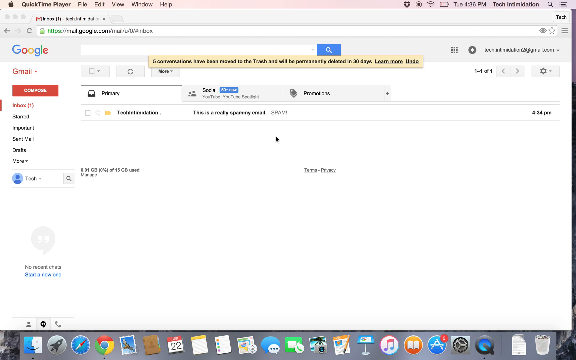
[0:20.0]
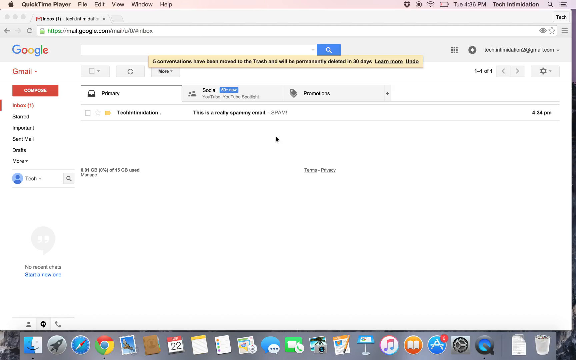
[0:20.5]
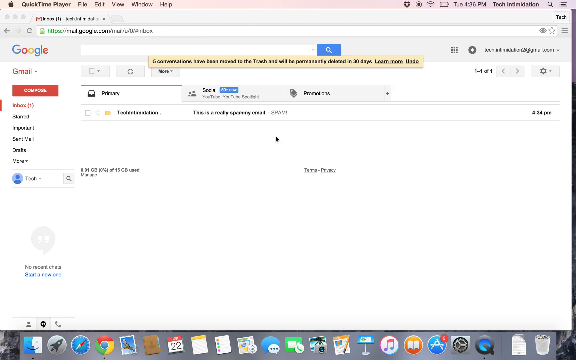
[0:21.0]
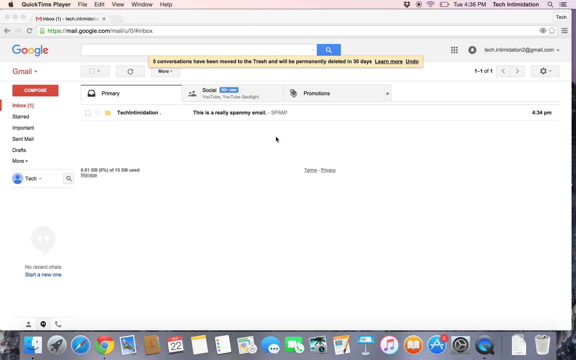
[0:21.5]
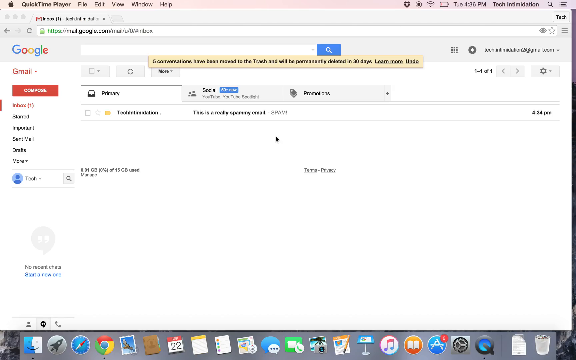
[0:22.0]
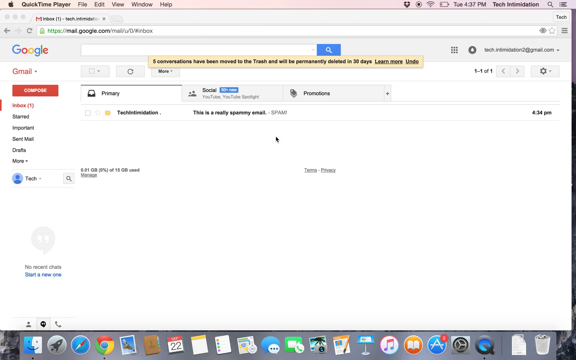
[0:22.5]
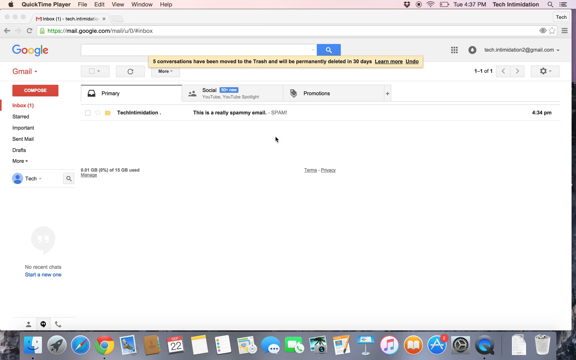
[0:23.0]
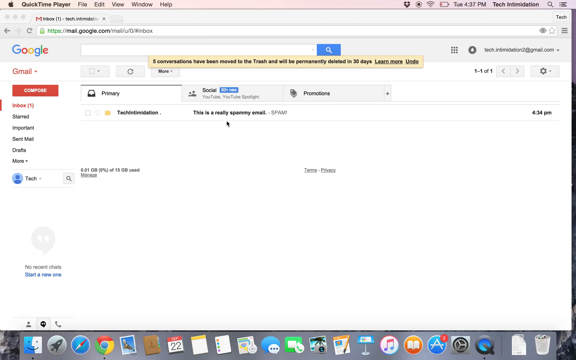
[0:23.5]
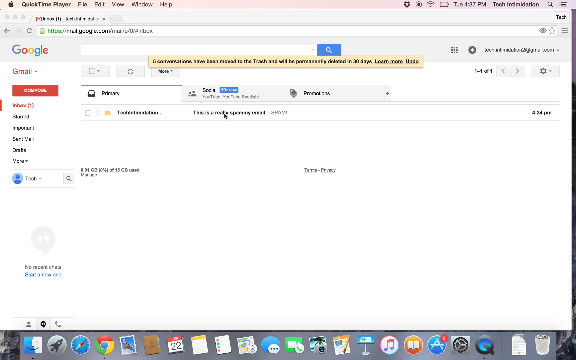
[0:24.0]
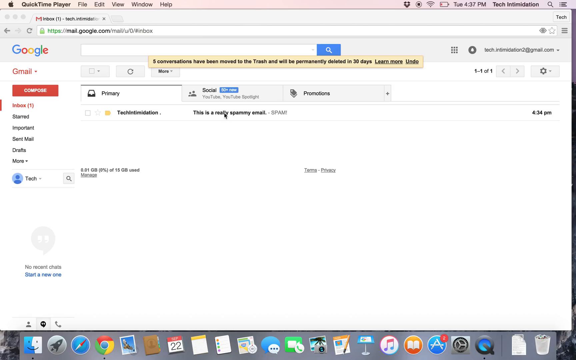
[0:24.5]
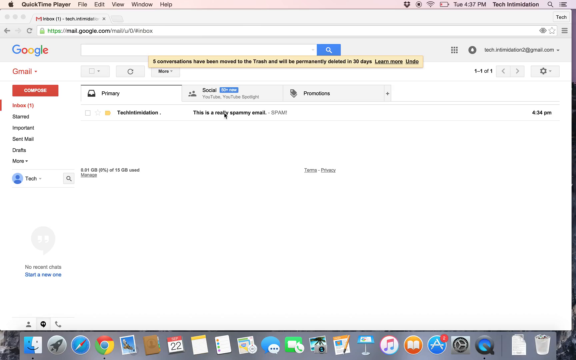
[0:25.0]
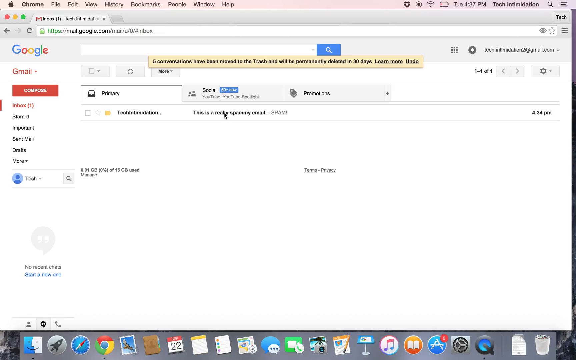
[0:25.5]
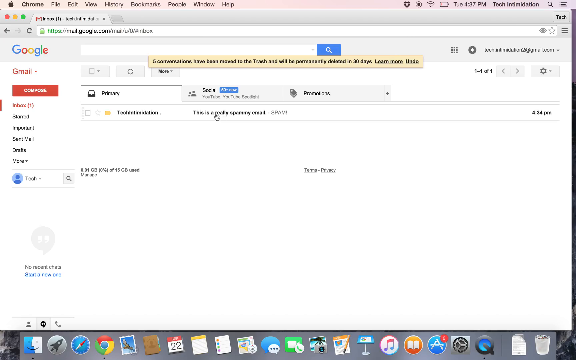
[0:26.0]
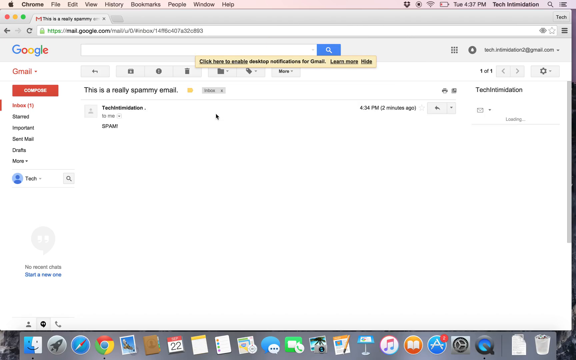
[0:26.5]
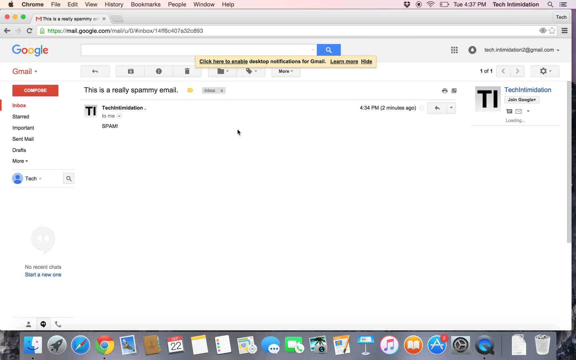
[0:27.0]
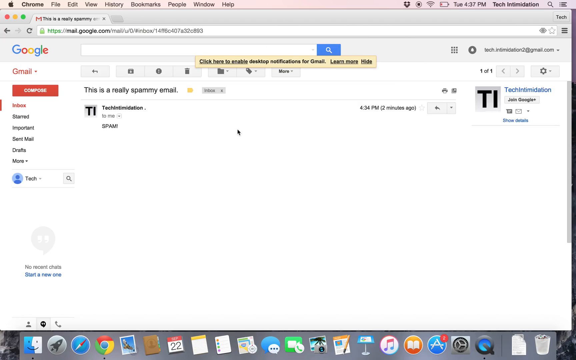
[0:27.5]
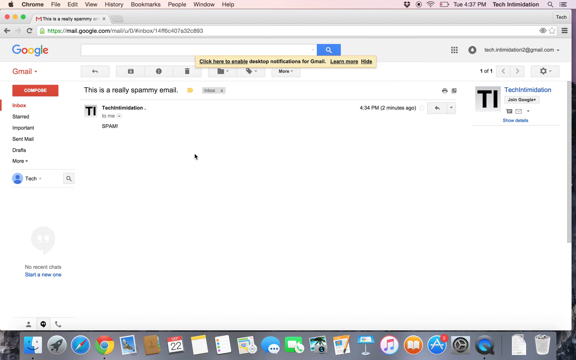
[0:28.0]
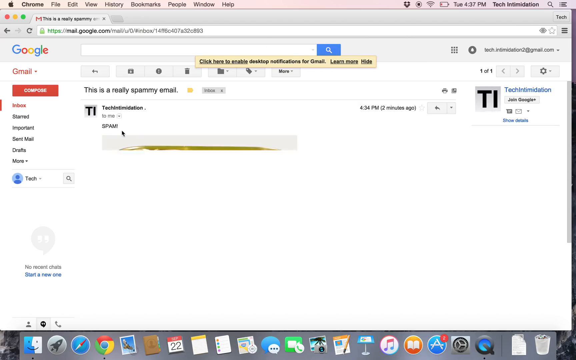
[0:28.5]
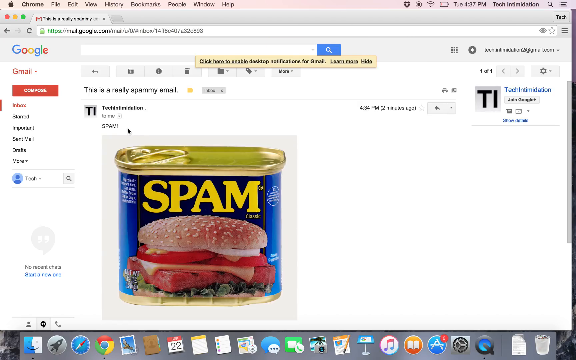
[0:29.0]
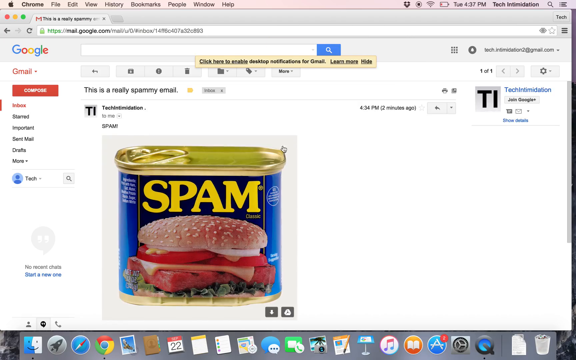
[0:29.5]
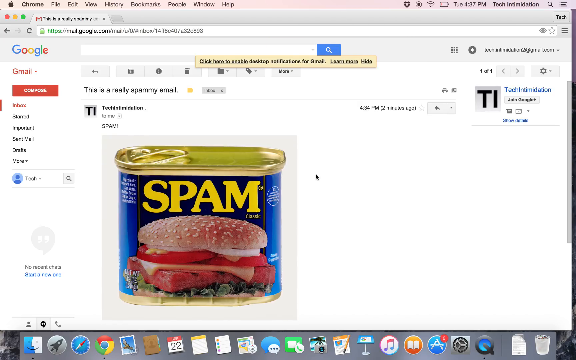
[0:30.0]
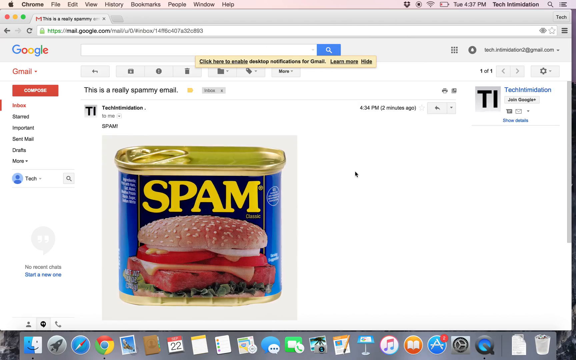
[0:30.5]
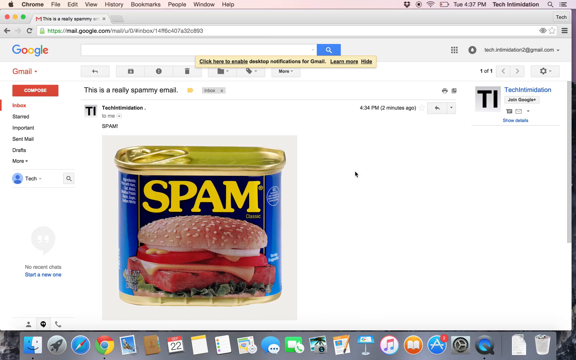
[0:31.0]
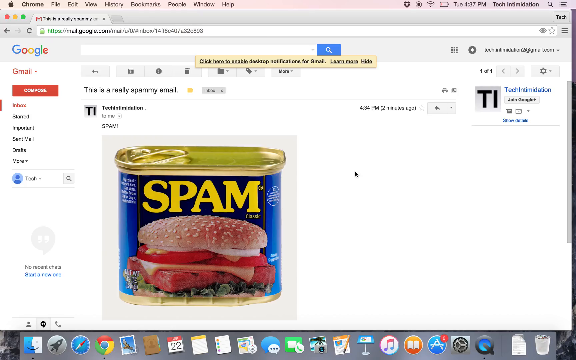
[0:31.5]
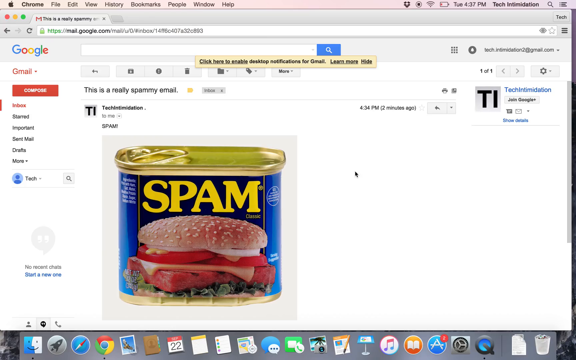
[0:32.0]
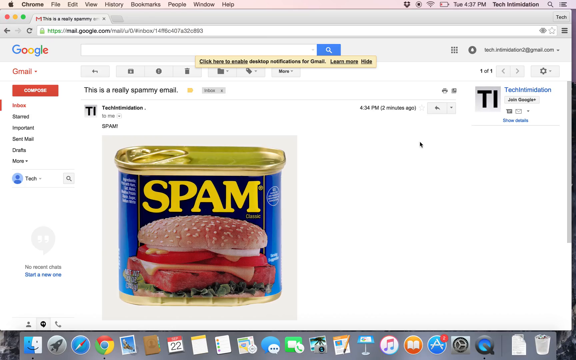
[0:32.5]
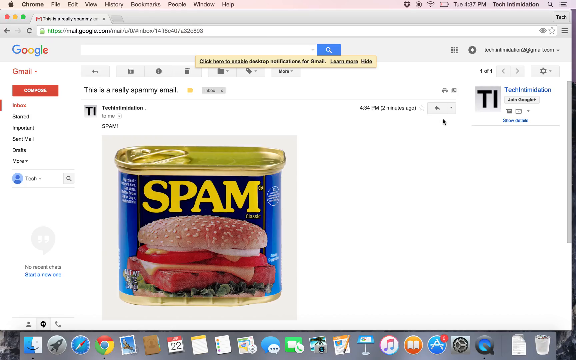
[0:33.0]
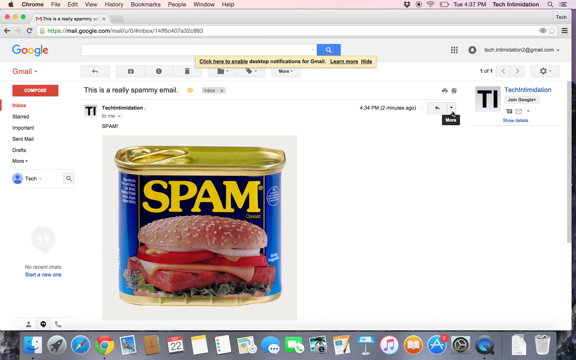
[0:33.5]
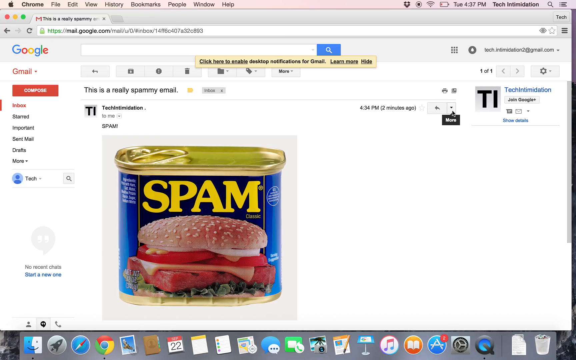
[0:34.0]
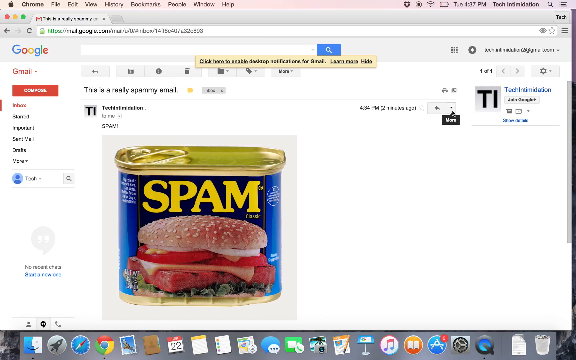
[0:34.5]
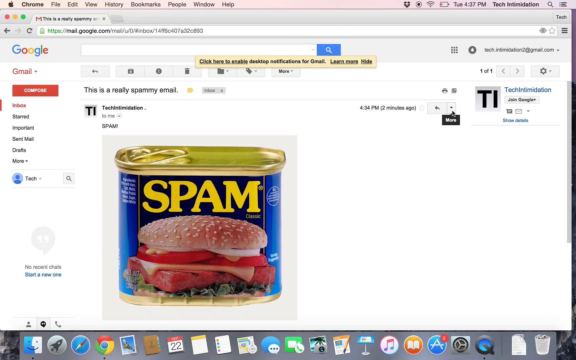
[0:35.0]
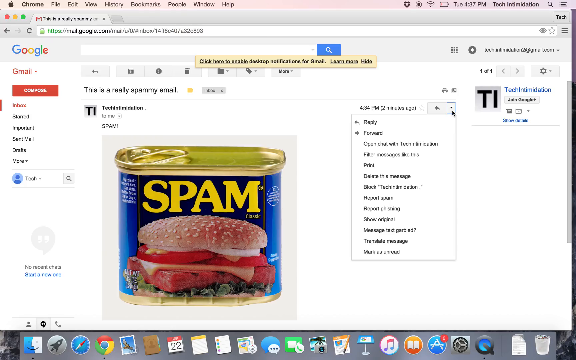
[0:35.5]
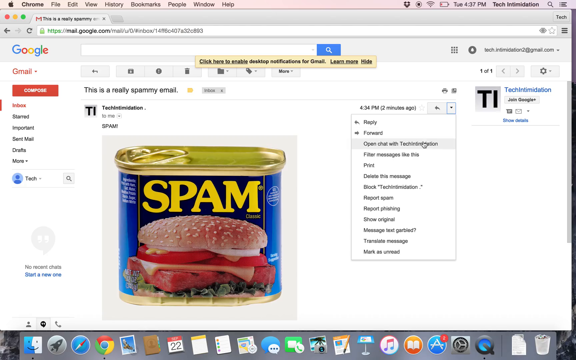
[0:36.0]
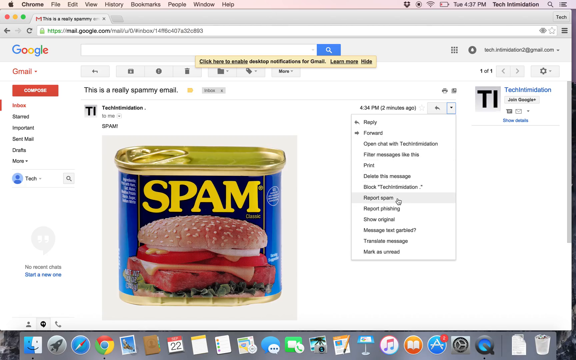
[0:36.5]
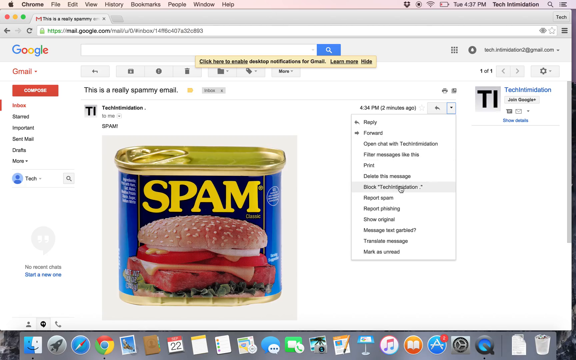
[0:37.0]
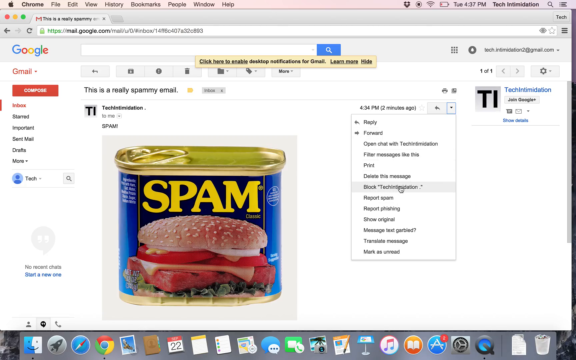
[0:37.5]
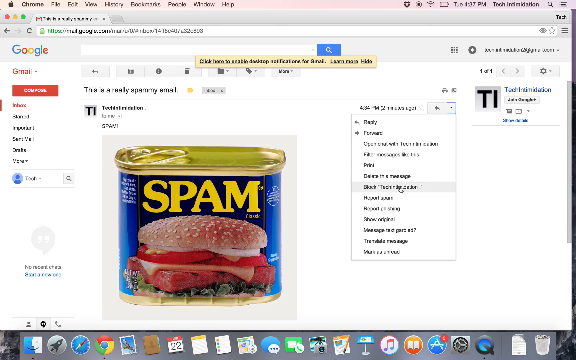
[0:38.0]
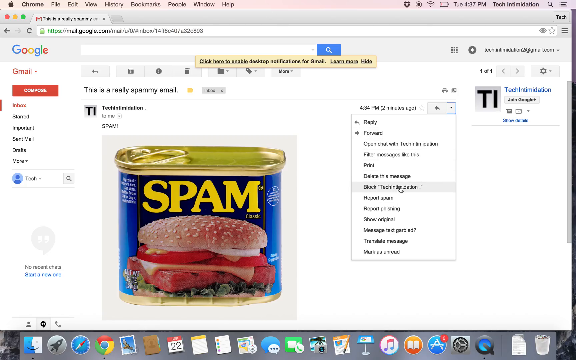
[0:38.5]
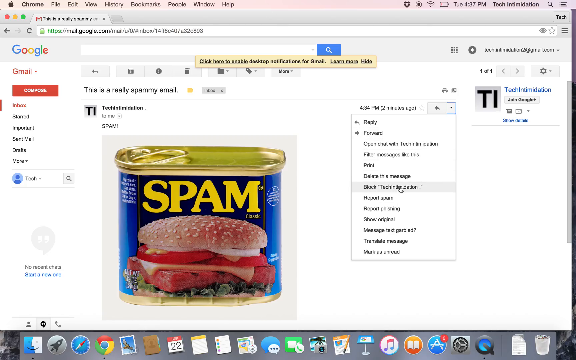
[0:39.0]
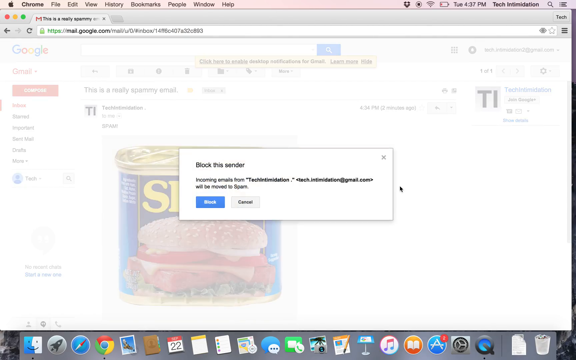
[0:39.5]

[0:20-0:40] A search window is on the screen. A spam email is shown, with a container holding spam, and the content of the spam is shown as something kind of like a burger. The screen demonstrates how to block a sender. There is apparently a Google search button, and Gmail with Inbox, Important, Sent Mail and Drafts, along with a space where words can be typed in to search.